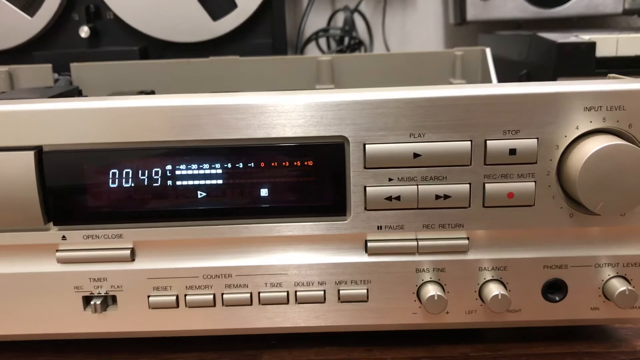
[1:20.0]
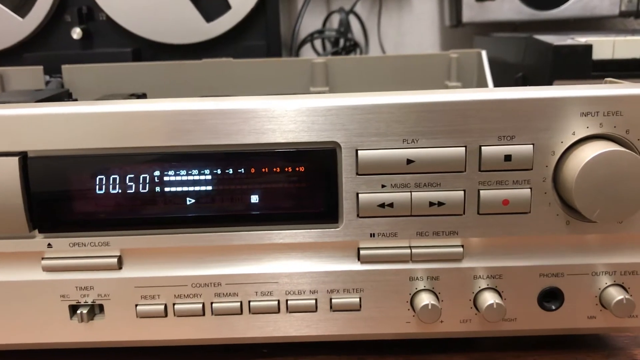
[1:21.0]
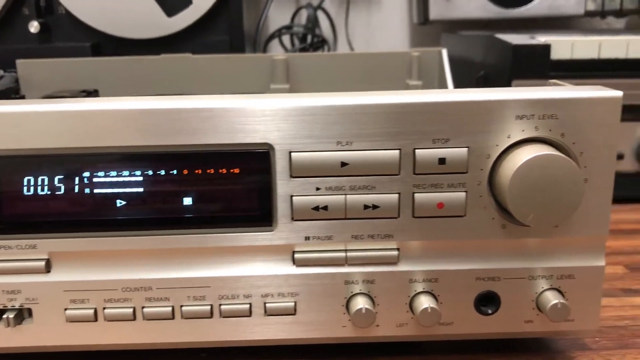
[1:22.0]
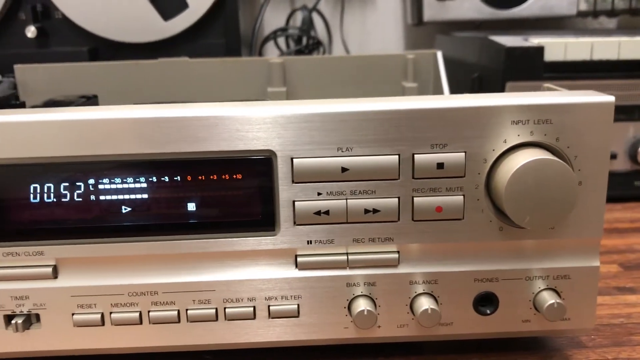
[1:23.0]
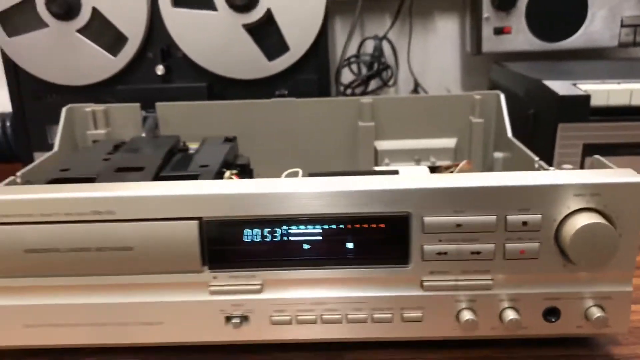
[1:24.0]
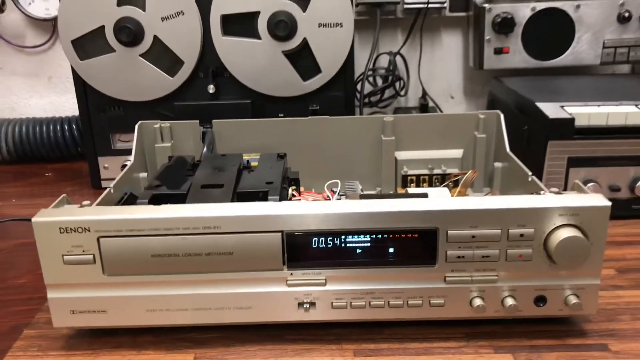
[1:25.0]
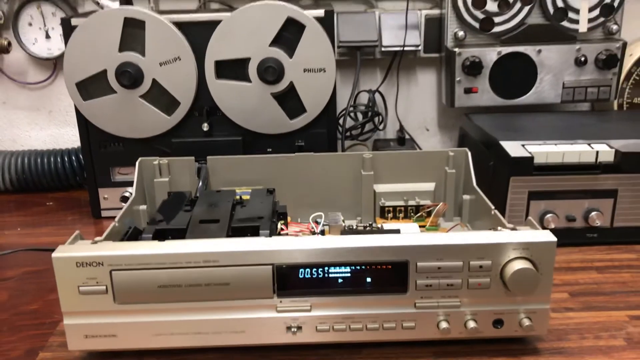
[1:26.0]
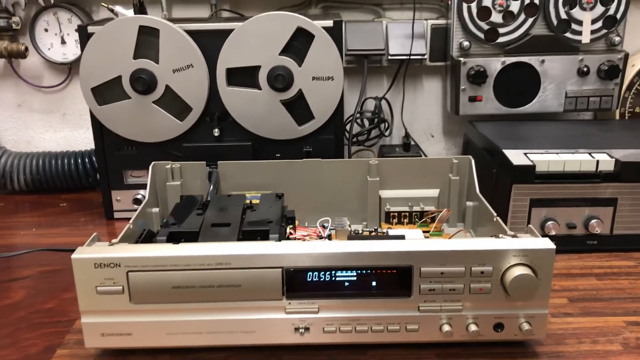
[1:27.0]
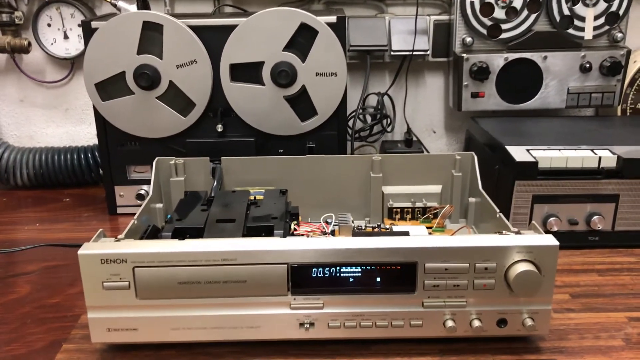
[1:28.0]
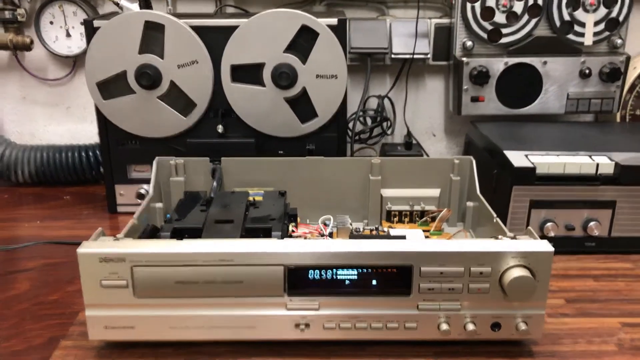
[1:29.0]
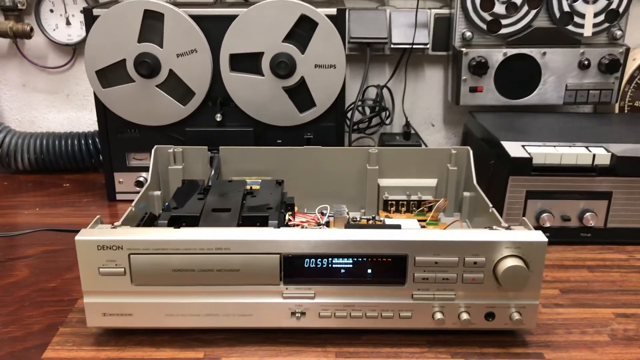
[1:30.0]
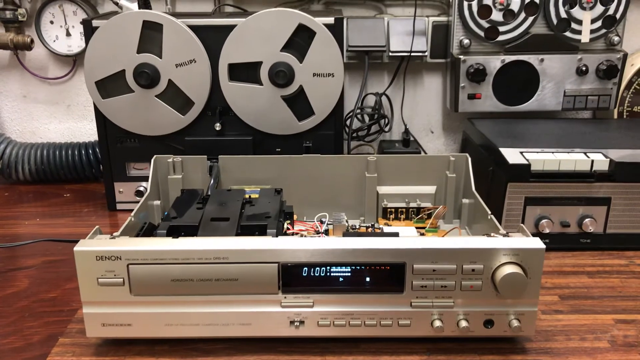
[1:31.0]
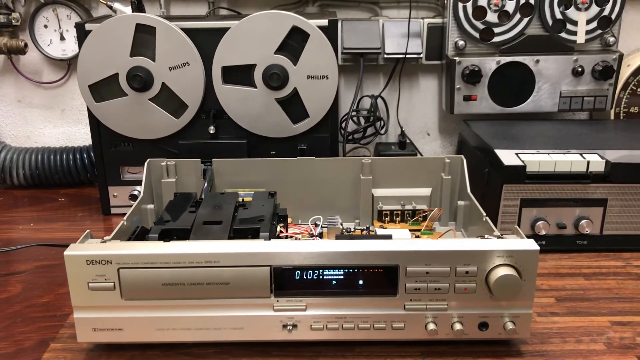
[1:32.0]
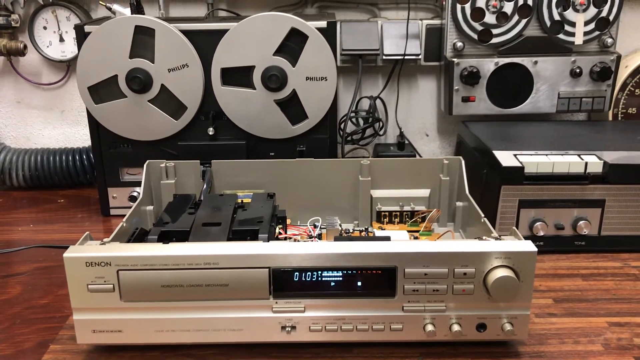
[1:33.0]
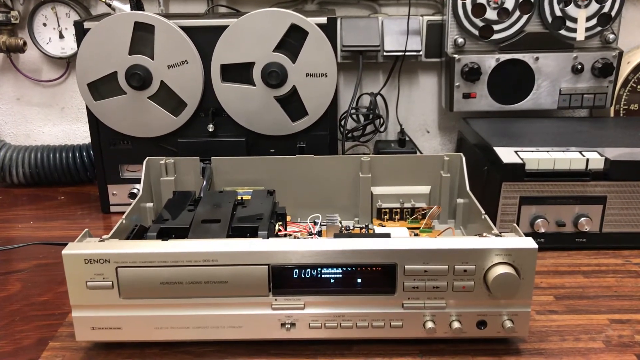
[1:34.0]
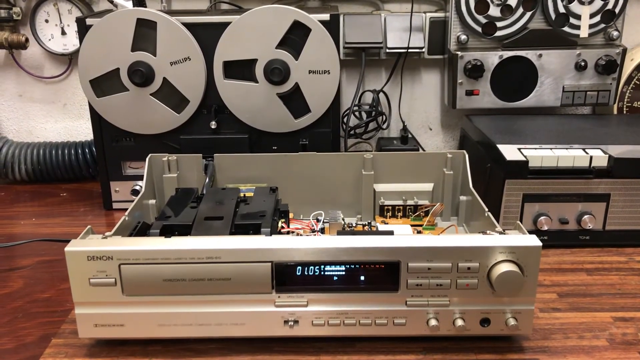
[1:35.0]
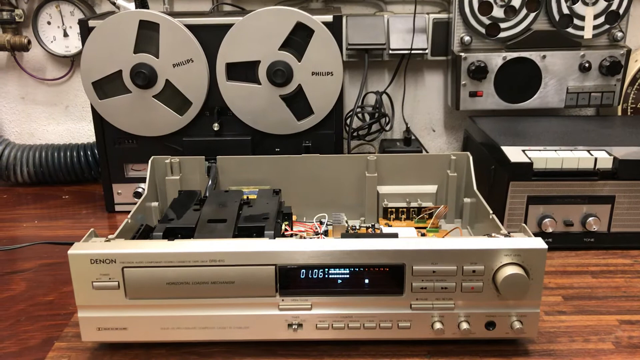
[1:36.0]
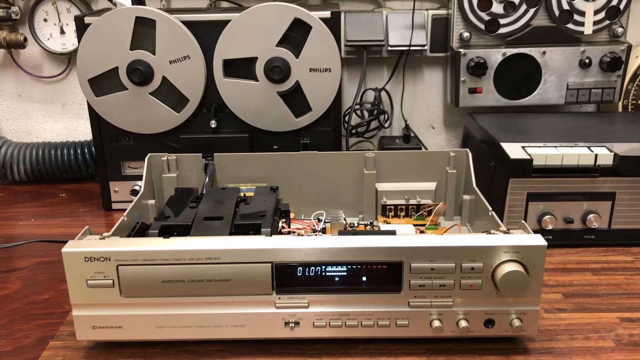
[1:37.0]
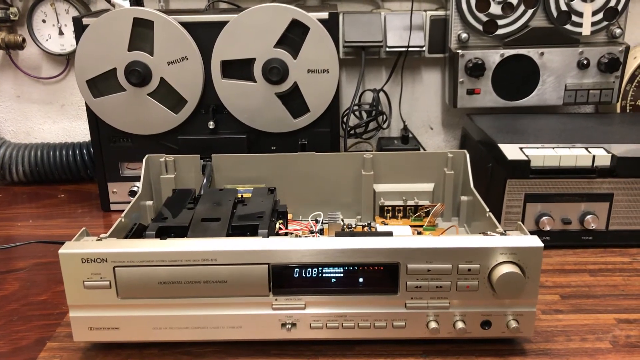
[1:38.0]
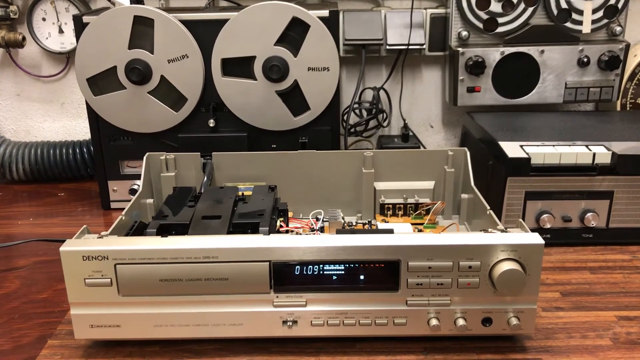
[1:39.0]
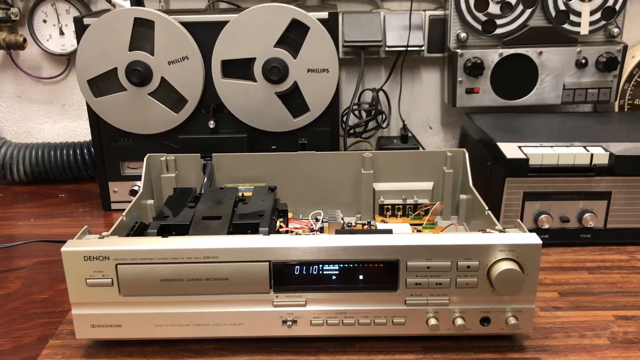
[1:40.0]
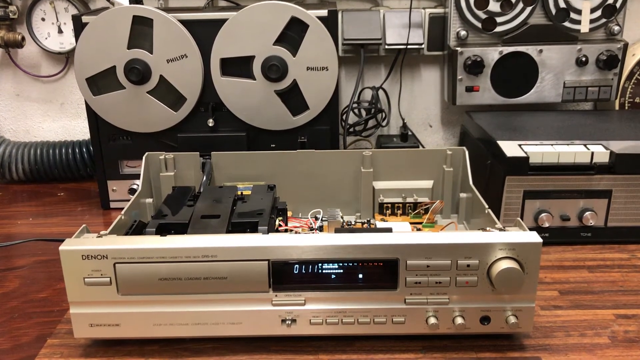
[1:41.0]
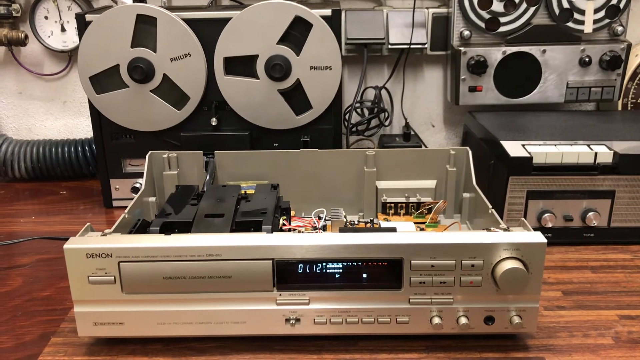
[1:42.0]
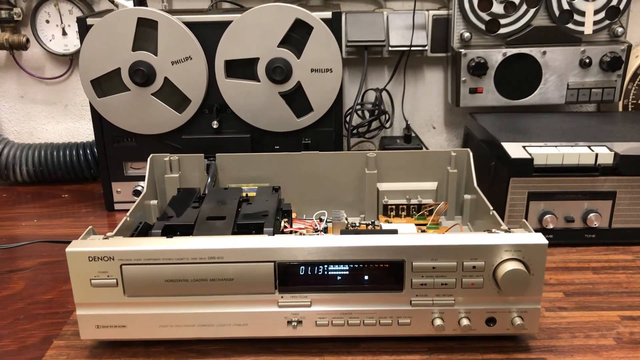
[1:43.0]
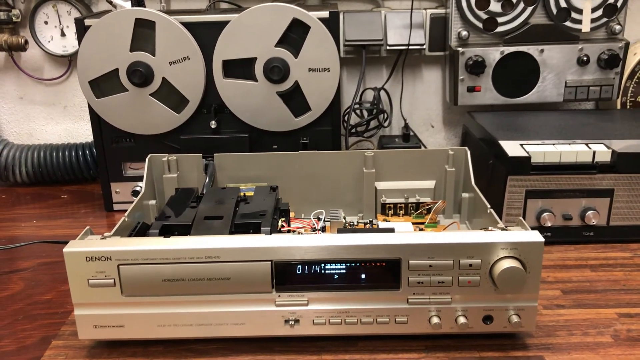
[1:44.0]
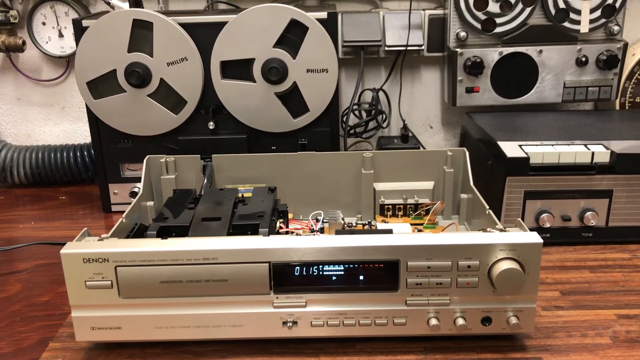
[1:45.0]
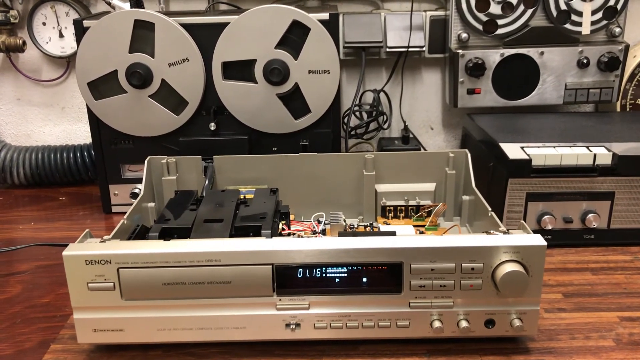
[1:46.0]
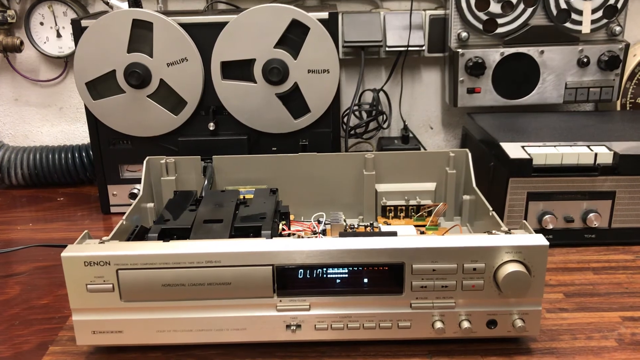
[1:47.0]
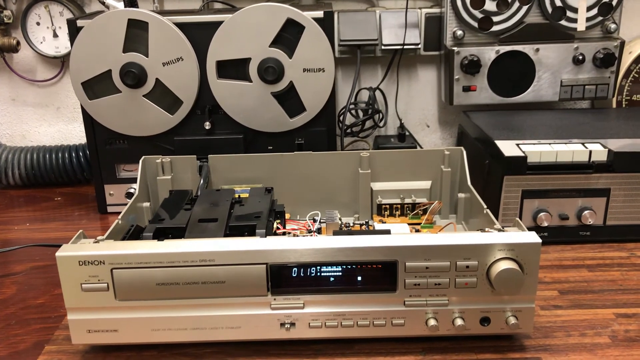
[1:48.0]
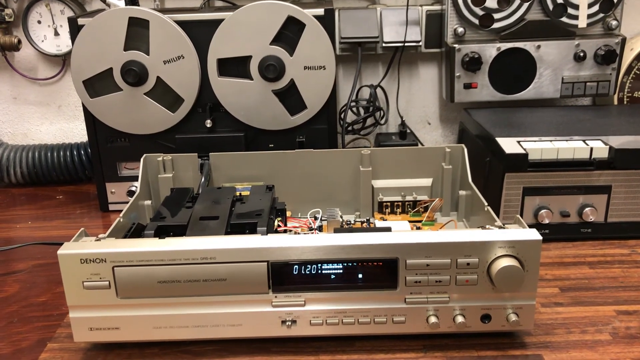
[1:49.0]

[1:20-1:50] The camera goes to the front of the audio recording machine again. The display apparently shows 49 seconds at first and then counts up; other numbers, 0.1 and 20, are also there but hard to make out. The inside of the machine is not visible, only the front and part of the display unit, and the shot is quite static.